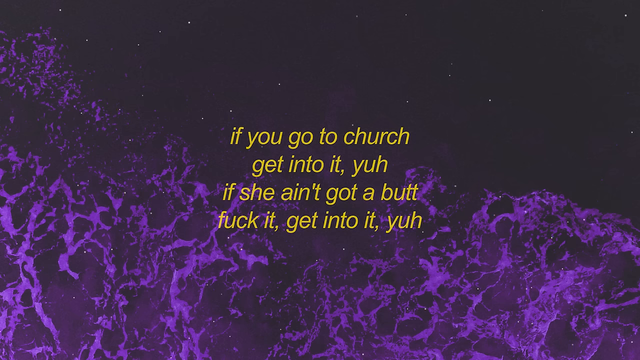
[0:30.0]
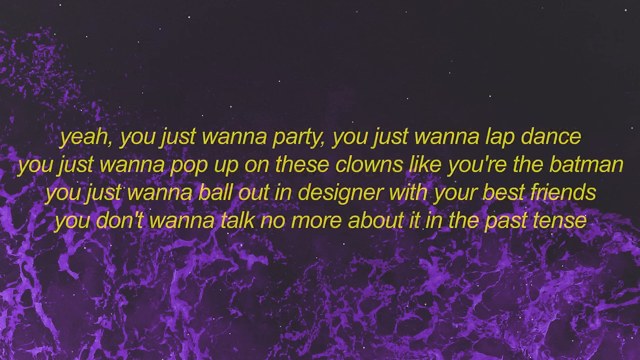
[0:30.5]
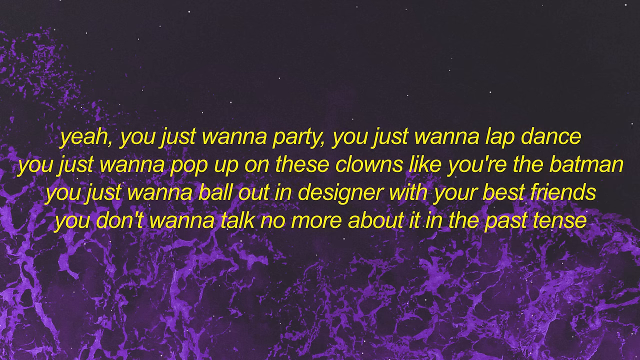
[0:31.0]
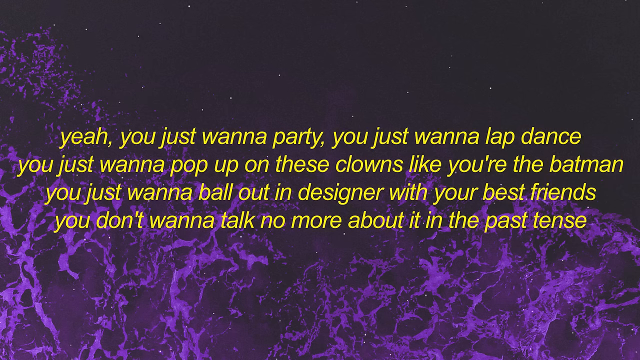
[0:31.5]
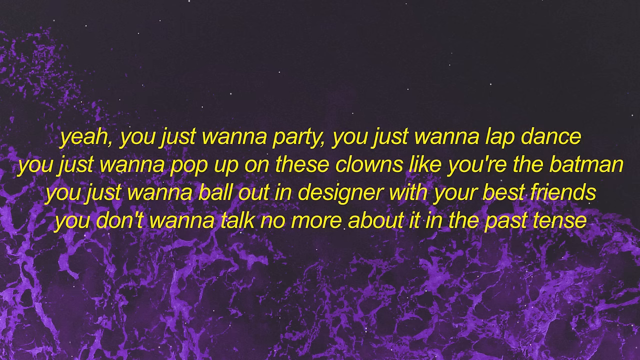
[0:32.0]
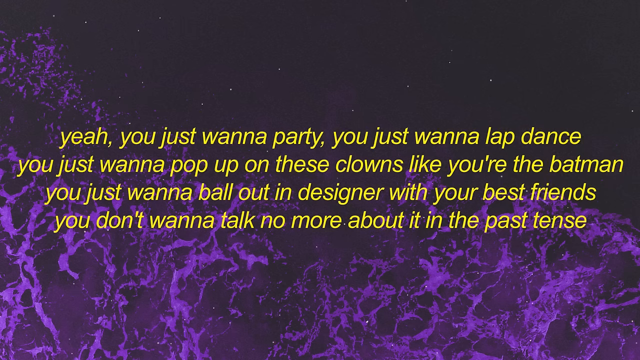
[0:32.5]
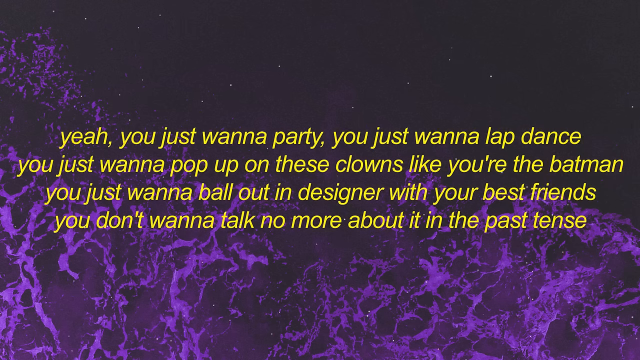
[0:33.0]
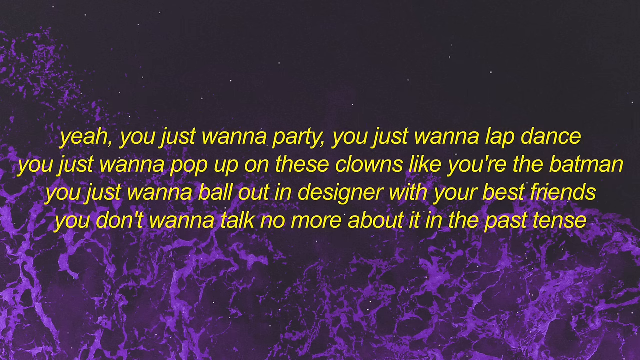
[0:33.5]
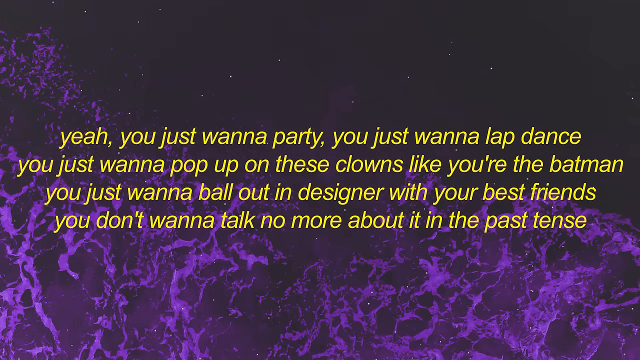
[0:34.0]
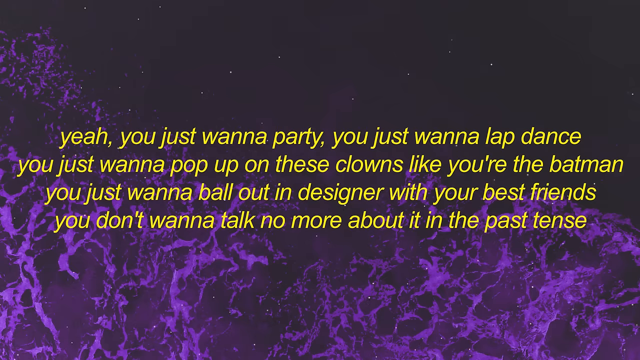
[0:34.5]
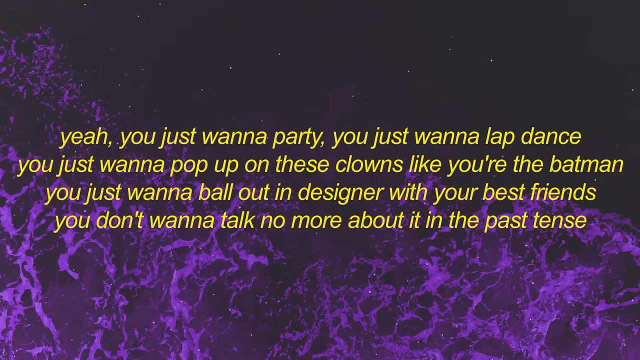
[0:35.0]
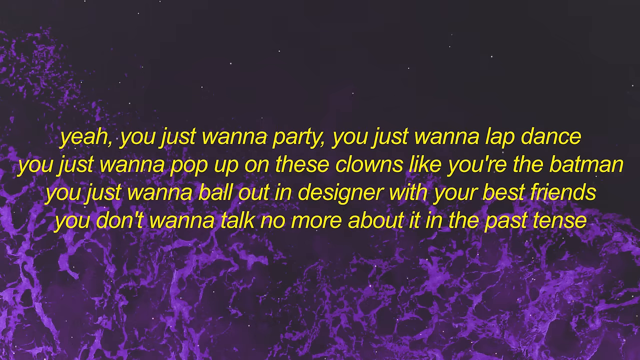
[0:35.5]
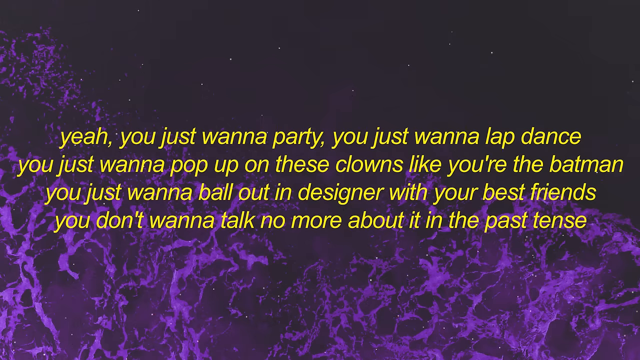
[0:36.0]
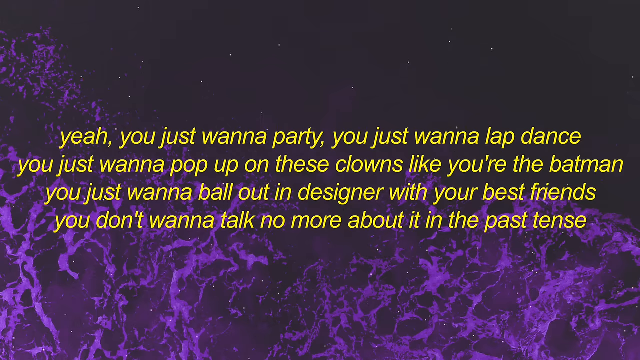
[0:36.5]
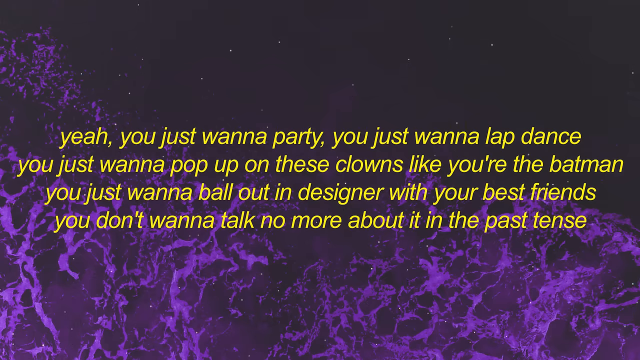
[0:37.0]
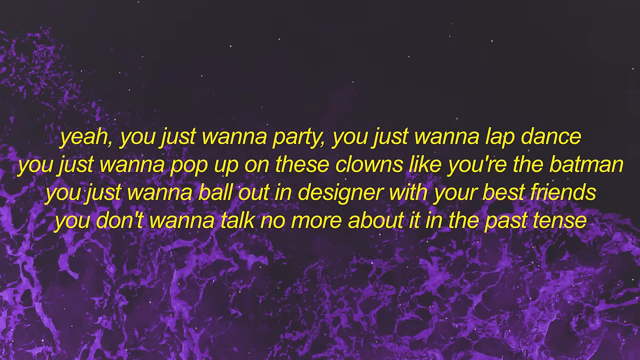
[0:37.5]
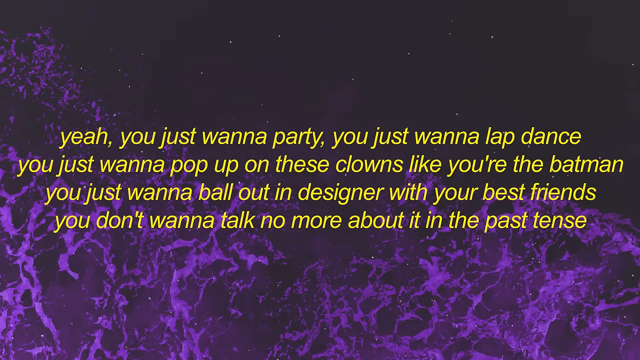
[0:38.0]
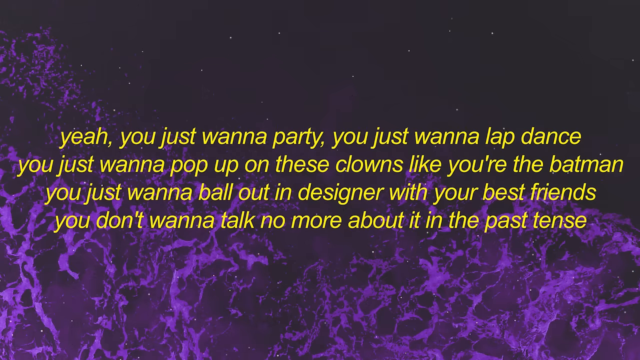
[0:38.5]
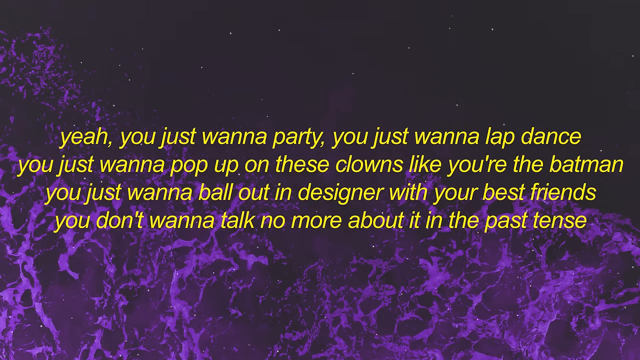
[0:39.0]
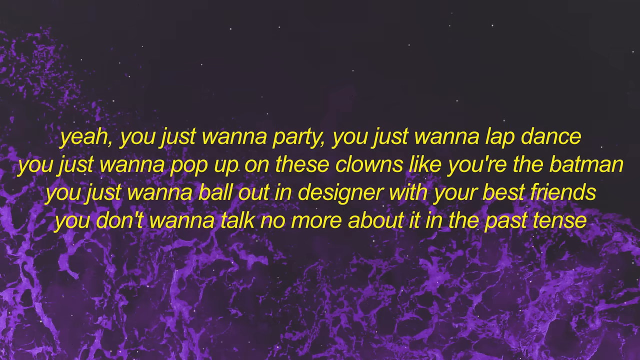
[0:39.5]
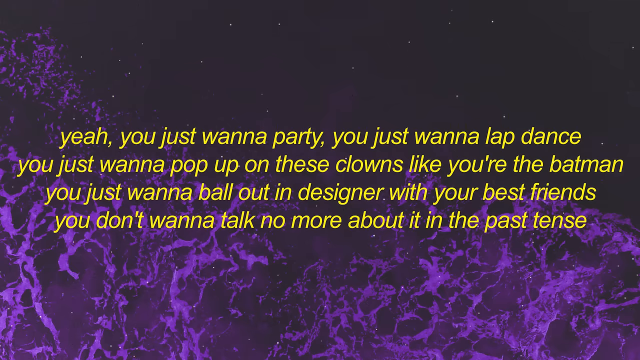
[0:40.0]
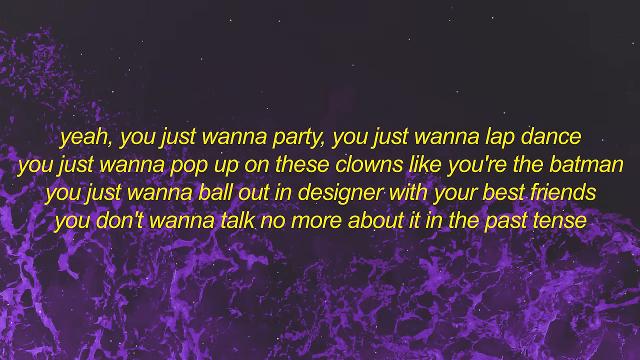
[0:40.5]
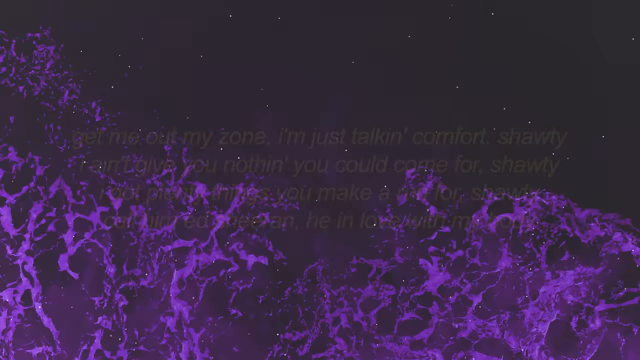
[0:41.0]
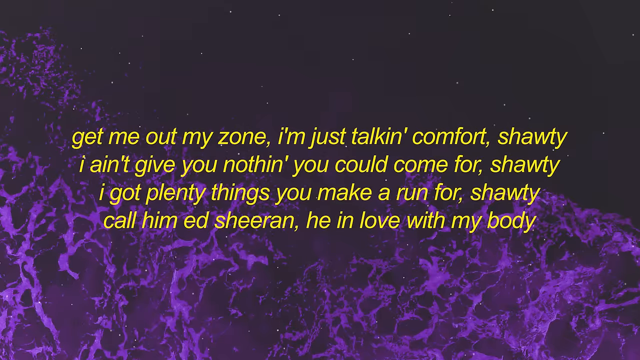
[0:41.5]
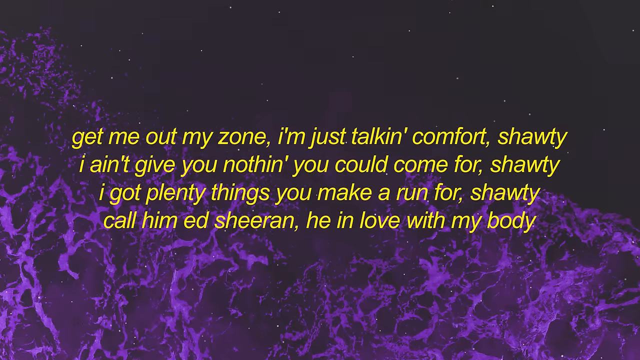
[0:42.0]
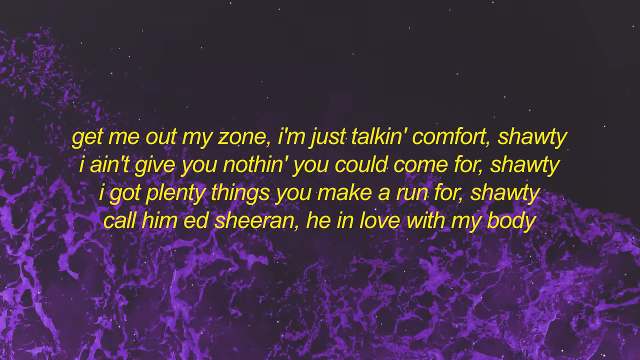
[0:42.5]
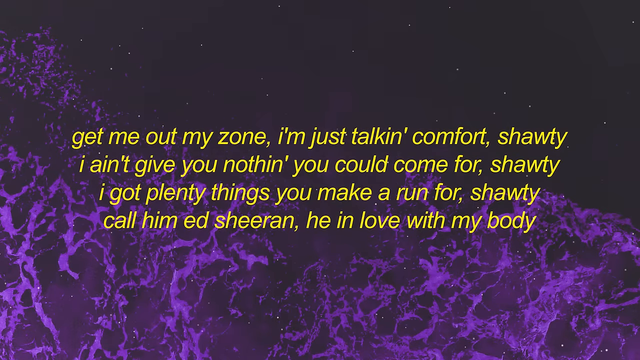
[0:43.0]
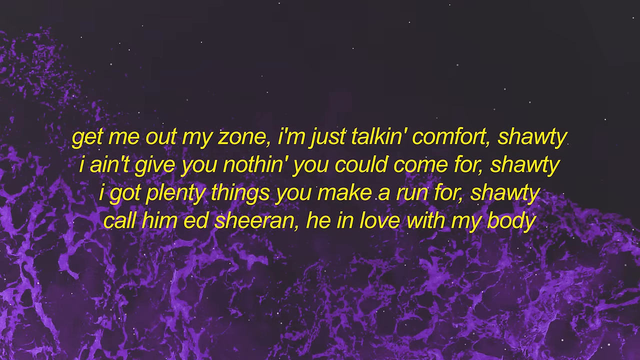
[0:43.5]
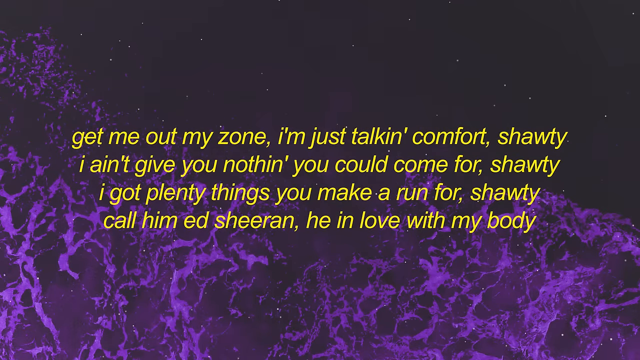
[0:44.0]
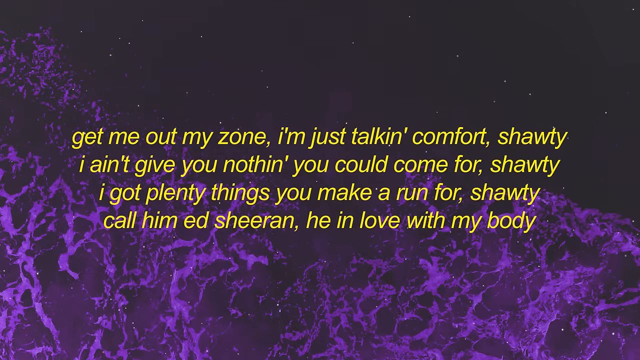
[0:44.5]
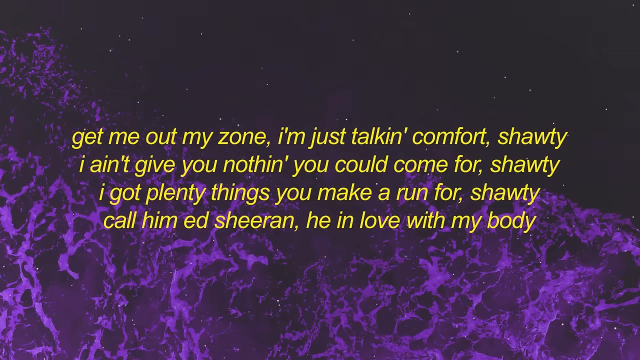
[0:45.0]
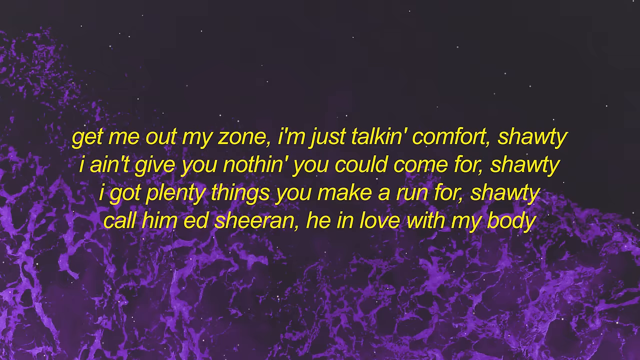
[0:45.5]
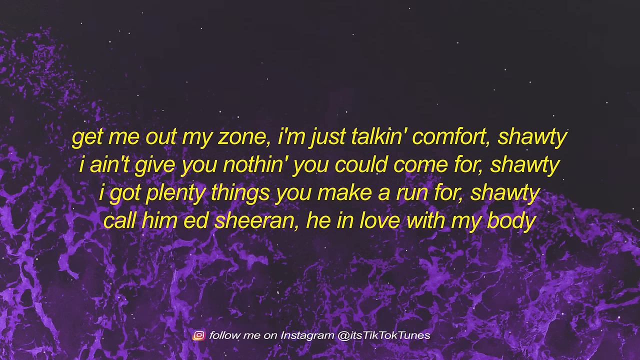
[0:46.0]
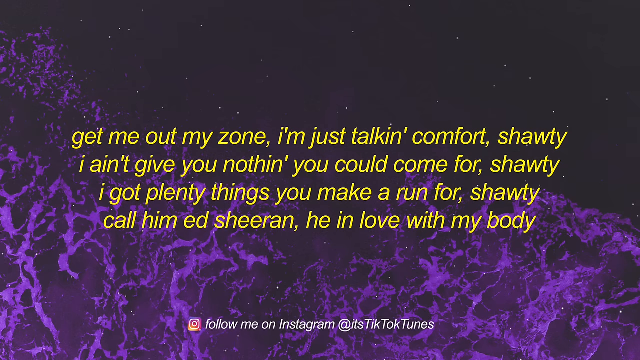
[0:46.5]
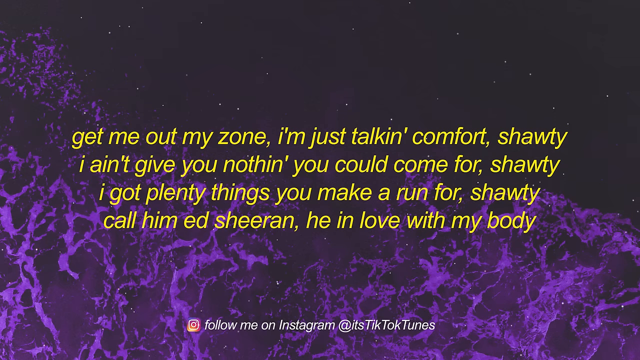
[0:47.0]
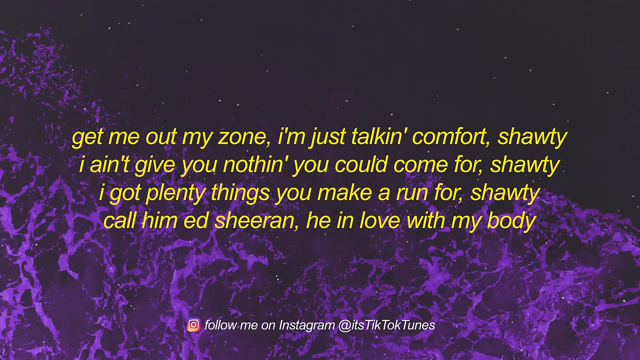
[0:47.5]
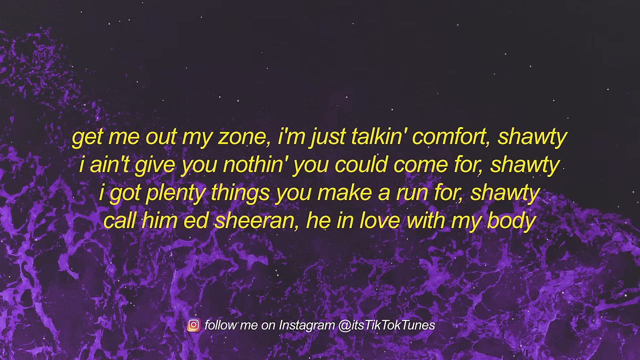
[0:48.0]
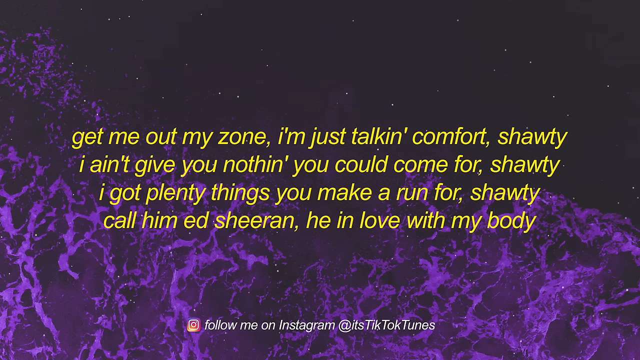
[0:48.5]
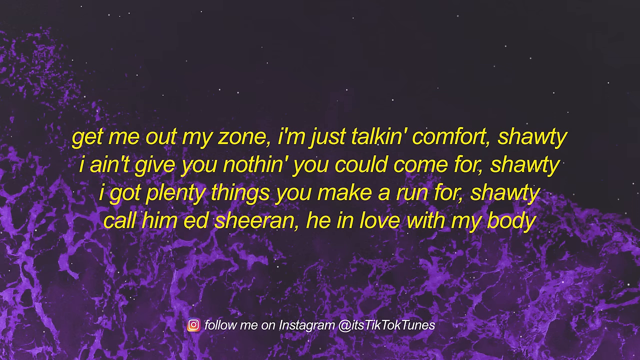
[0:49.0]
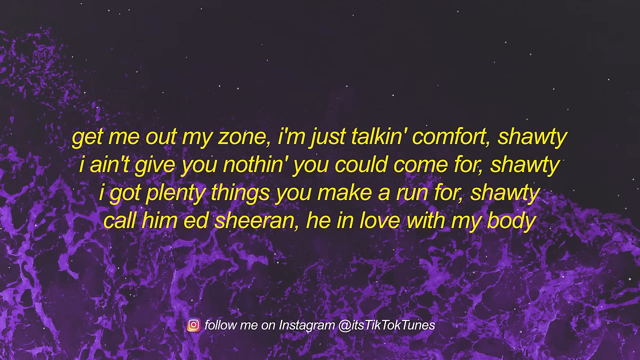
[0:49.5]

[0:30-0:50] Words on the screen, possibly a poem or song lyrics, begin with "if you go to church, get into it. Yeah. If she ain't got a butt, fuck it. Get into it. Yeah." The text continues: "yeah, you just want to party. You just want to lap dance. You just want to pop up on these clowns like you're the Batman. You just want to ball out and designer with your best friends. You don't want to talk no more about it in the past tense." The next screen reads "get me out my zone. I'm just talking comfort. Shanti, I ain't give you nothing. You could come for Shanti. I got plenty things you make a run for Shanti. Call him Ed Sharon. He in love with my body." The words are in yellow font, and the lyrics then return to the "going to church" lines and some of the same lyrics from the beginning.